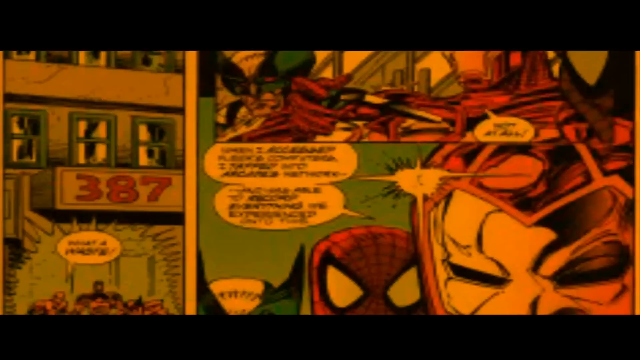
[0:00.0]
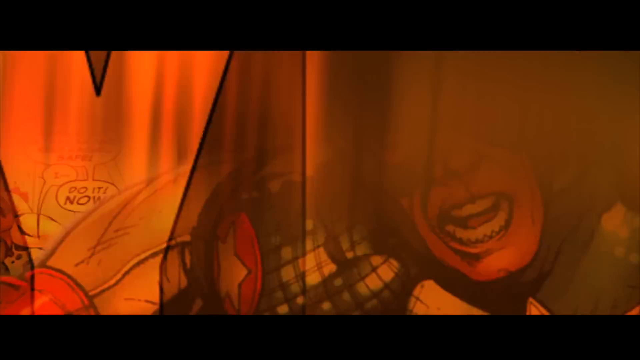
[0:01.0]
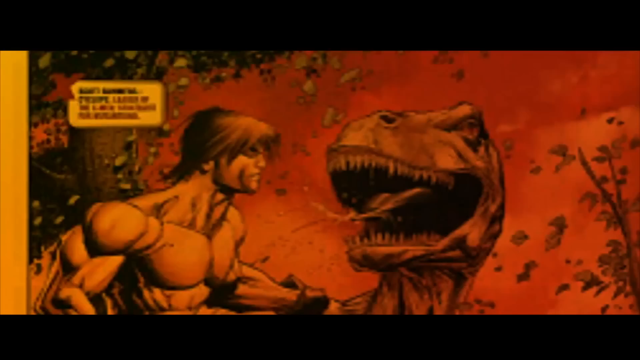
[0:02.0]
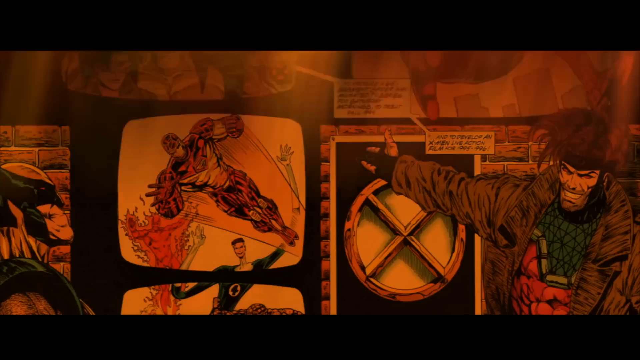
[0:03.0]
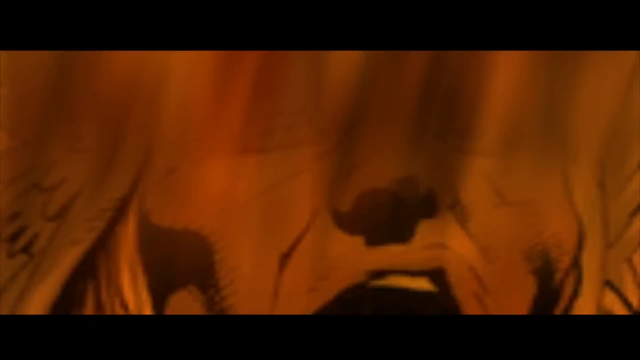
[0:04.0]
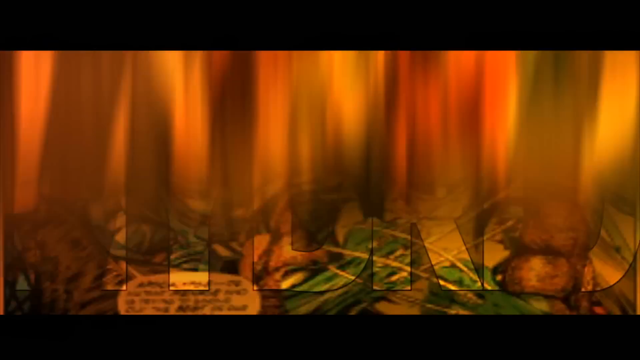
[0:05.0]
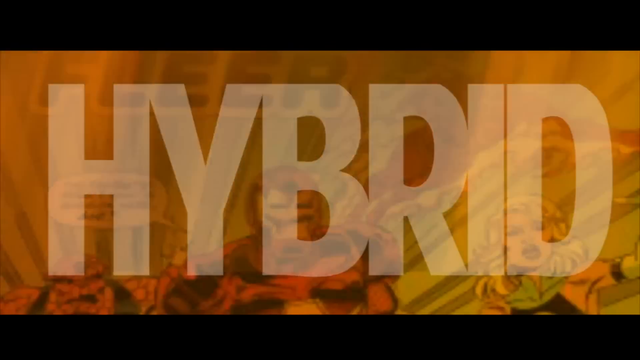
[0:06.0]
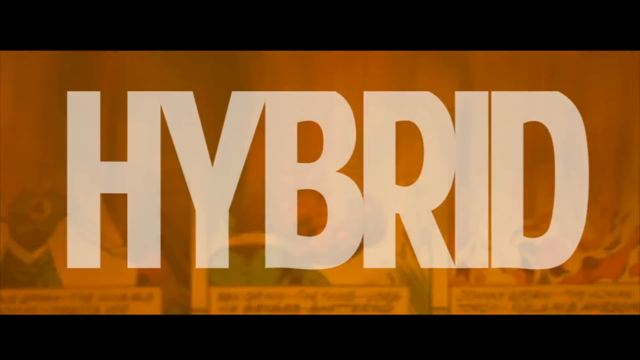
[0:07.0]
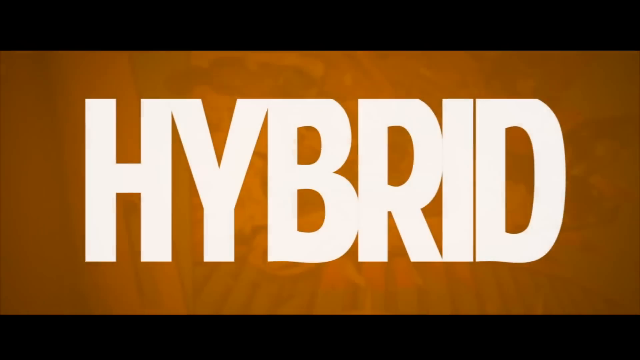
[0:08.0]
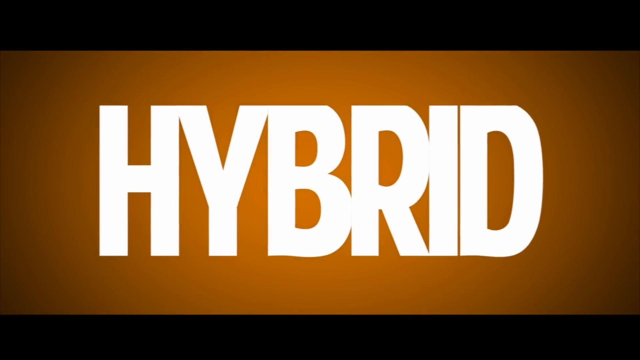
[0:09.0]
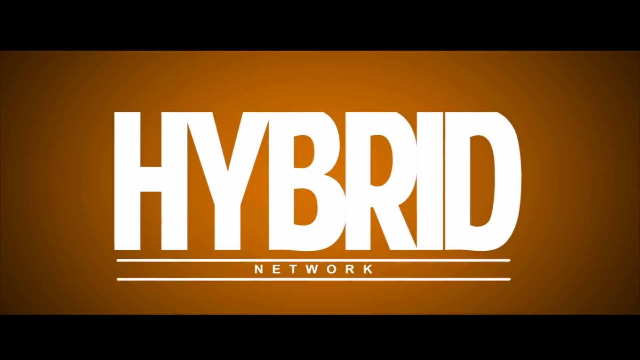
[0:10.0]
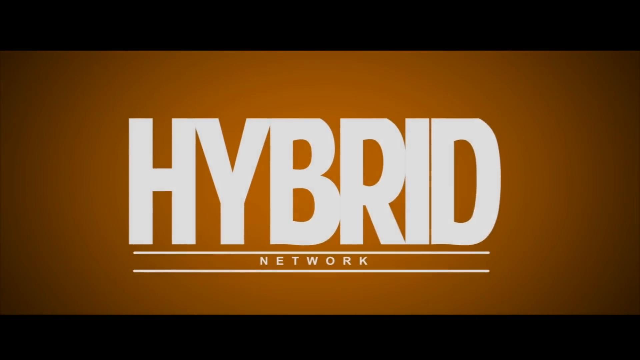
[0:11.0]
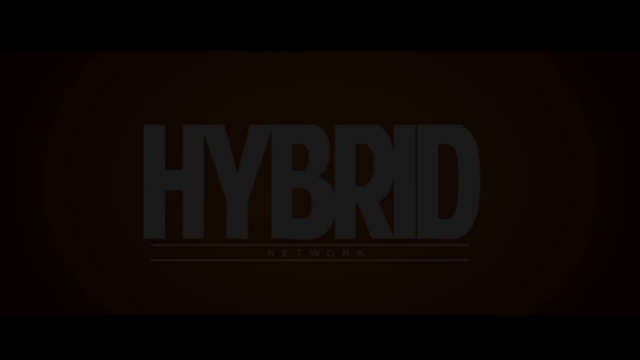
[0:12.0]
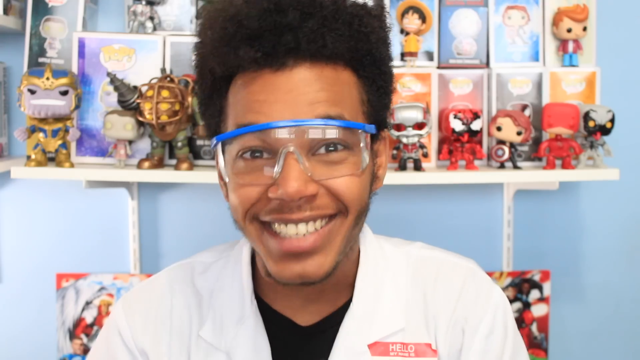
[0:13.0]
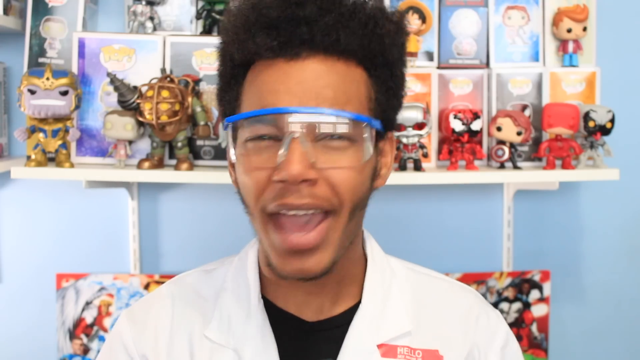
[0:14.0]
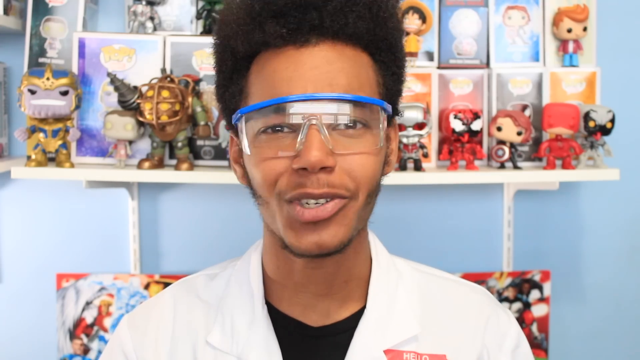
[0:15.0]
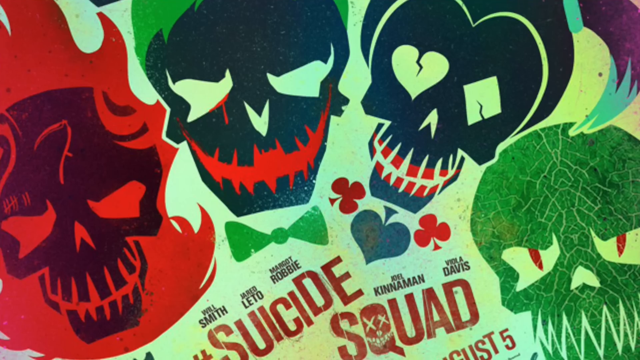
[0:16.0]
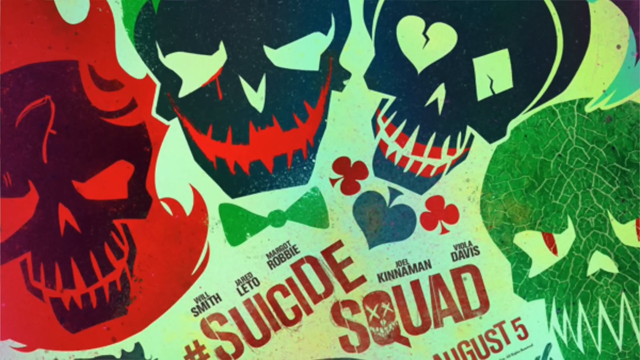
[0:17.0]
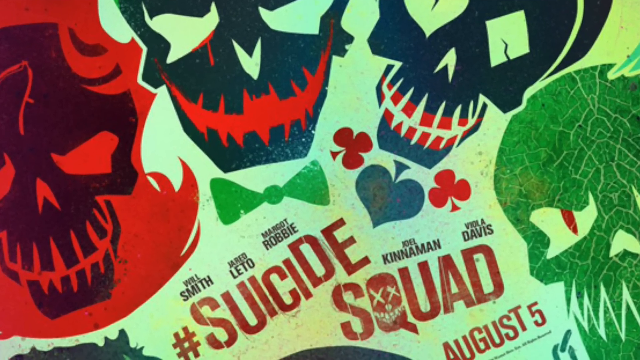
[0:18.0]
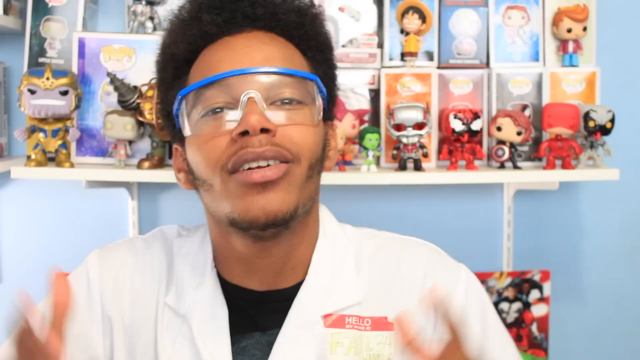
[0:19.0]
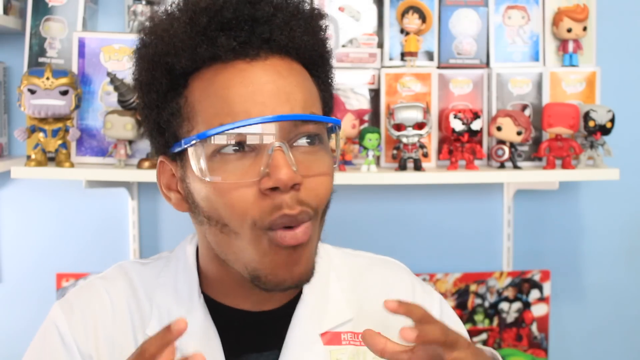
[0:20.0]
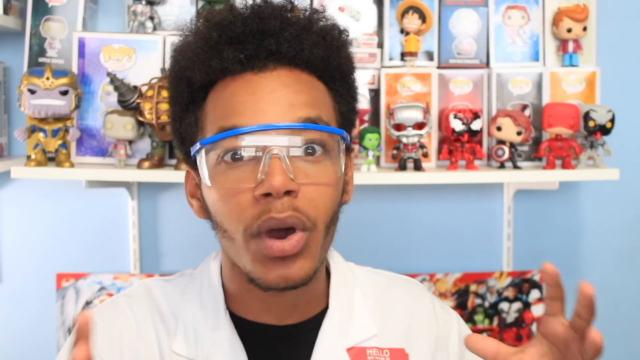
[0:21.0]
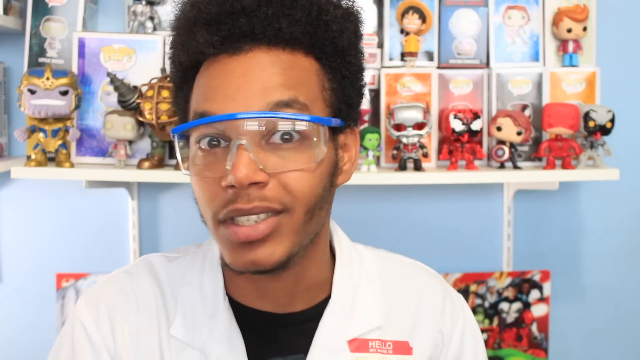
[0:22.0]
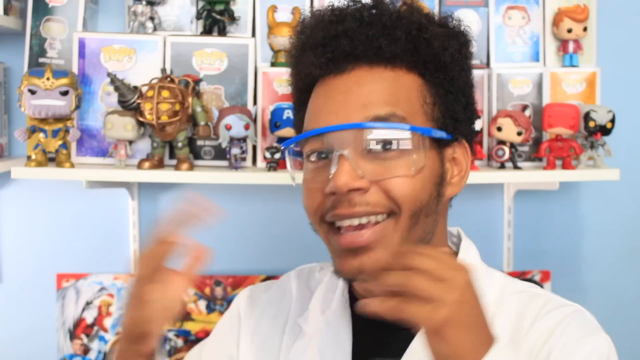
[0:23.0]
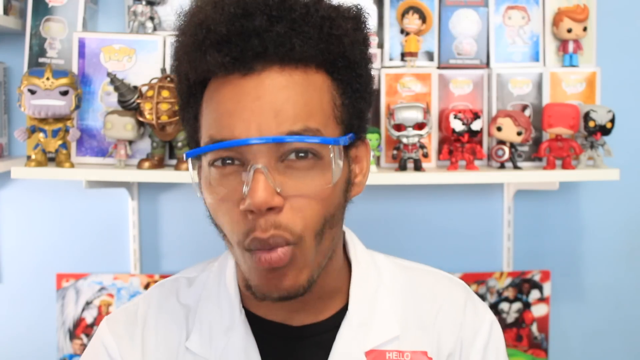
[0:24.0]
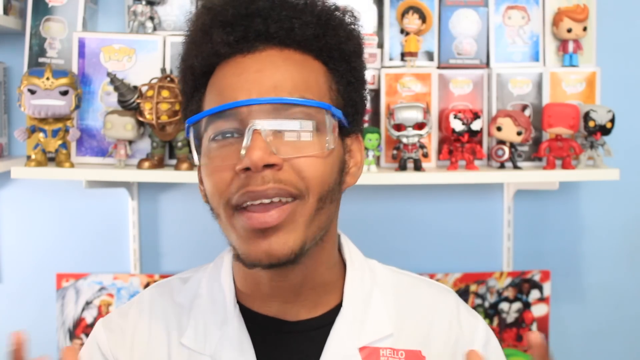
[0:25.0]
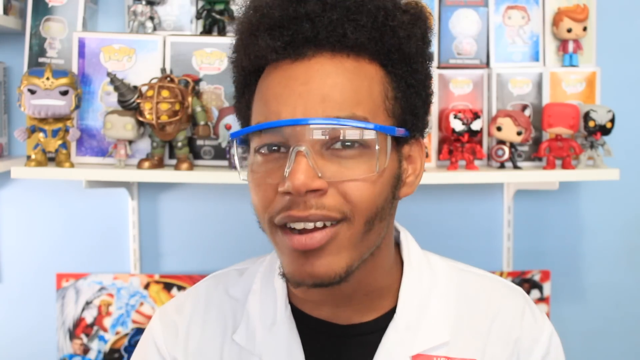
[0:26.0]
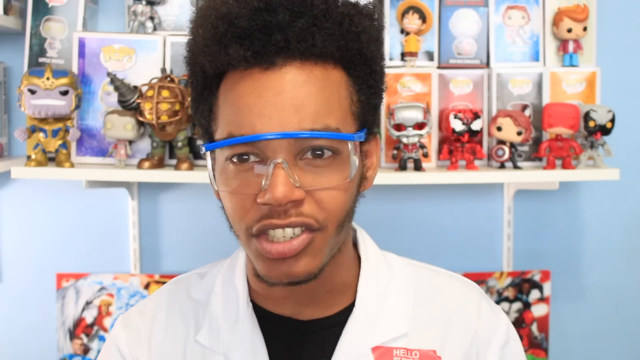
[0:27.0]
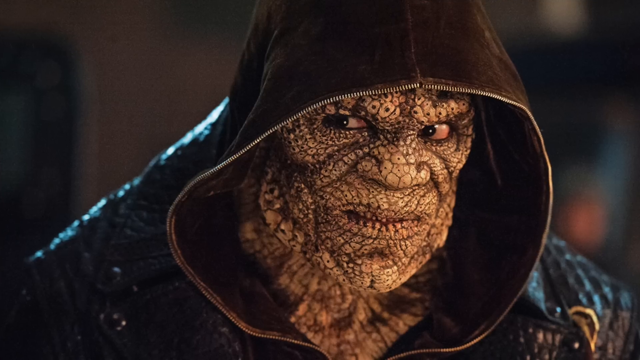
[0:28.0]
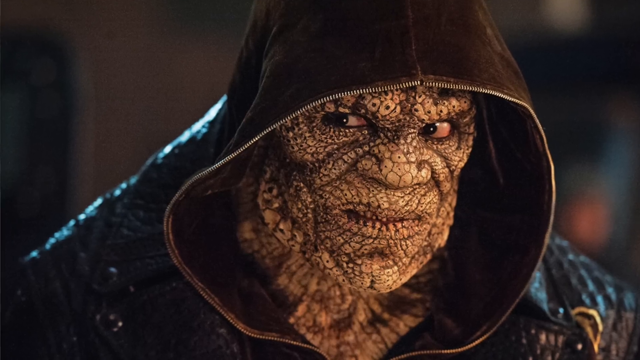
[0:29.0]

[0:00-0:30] A man wearing a white jacket talks about cartoons. What appears to be a monster is shown, along with a bus with "387" written on it on the left-hand side; the bus's top is white with green on the sides, and three windows are visible. On the right-hand side there is a picture that appears to be Spider-Man and another man on the far right, with what they are saying written as captions. The overall setting is yellow and red. The man in the white jacket wears goggles, and behind him small toys of cartoon characters are displayed.